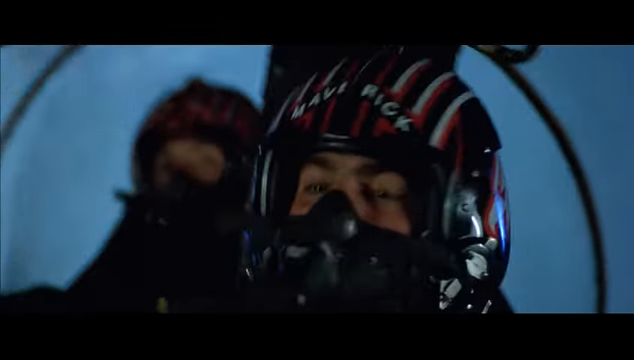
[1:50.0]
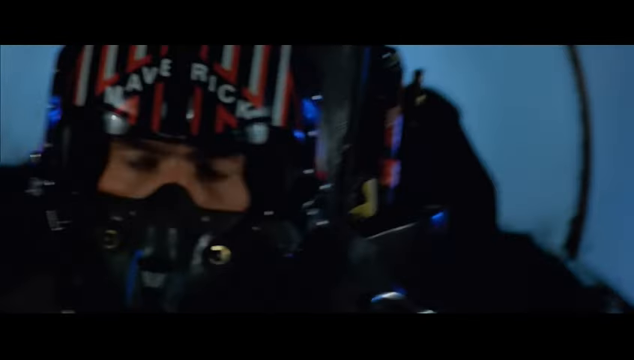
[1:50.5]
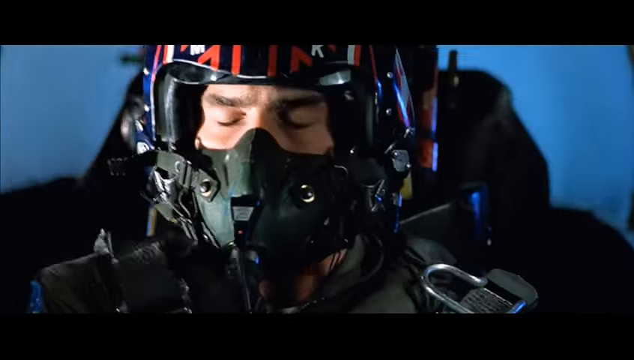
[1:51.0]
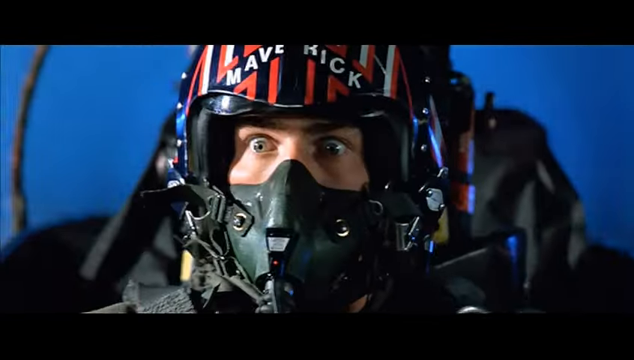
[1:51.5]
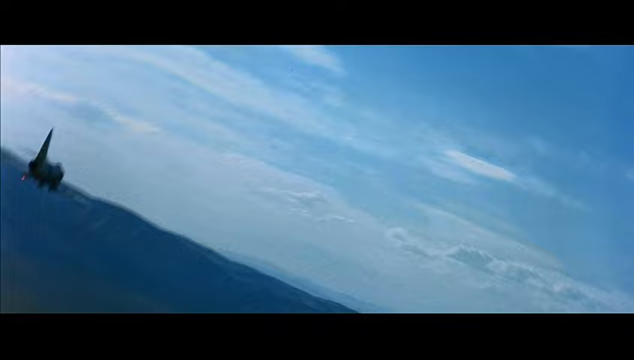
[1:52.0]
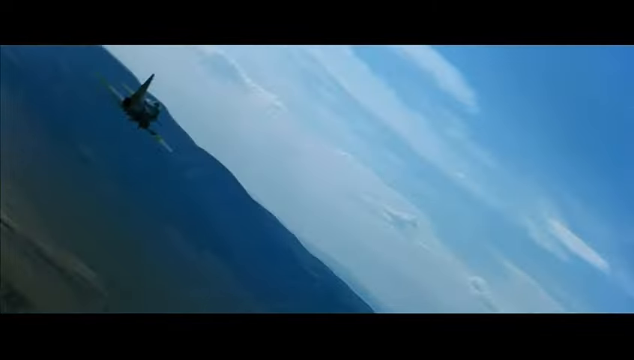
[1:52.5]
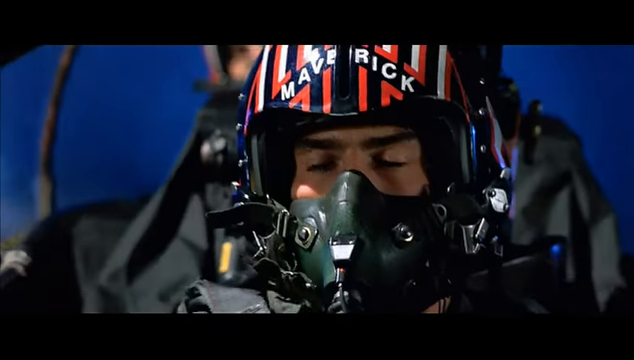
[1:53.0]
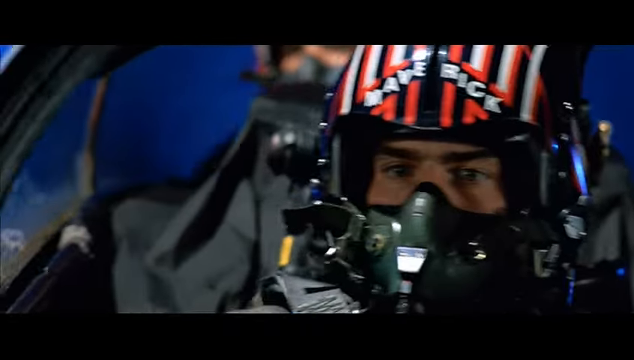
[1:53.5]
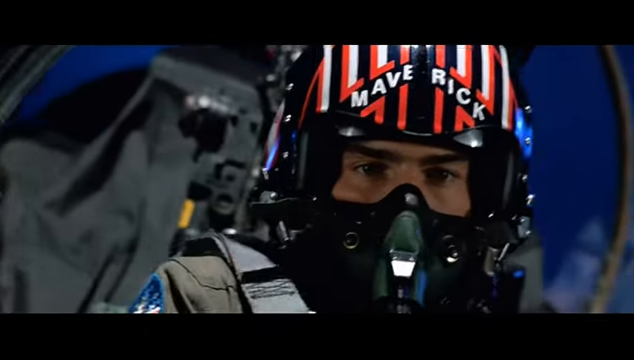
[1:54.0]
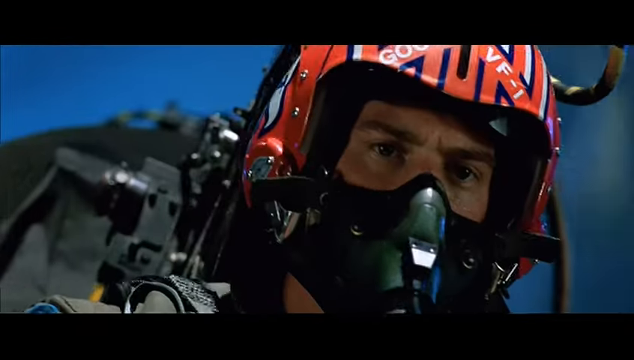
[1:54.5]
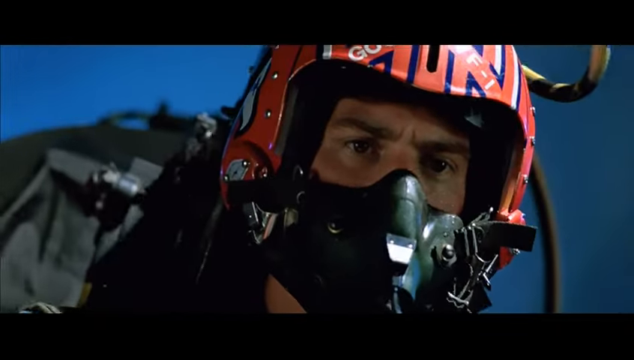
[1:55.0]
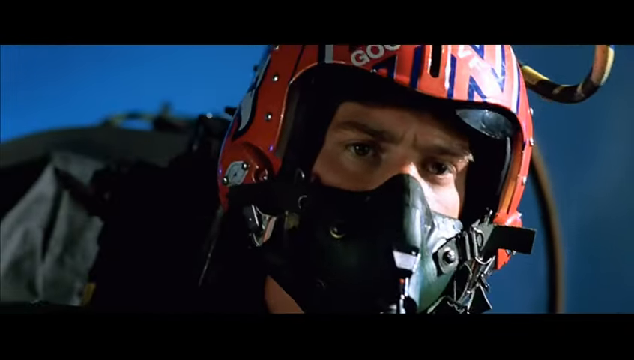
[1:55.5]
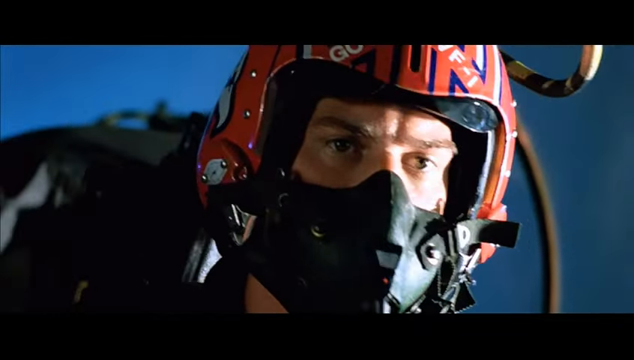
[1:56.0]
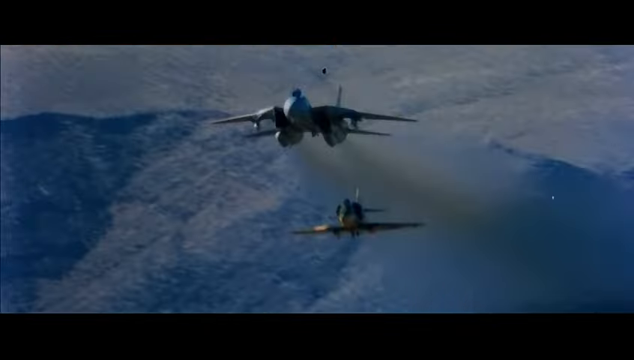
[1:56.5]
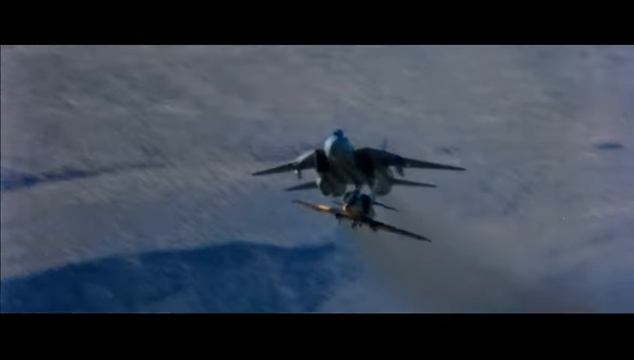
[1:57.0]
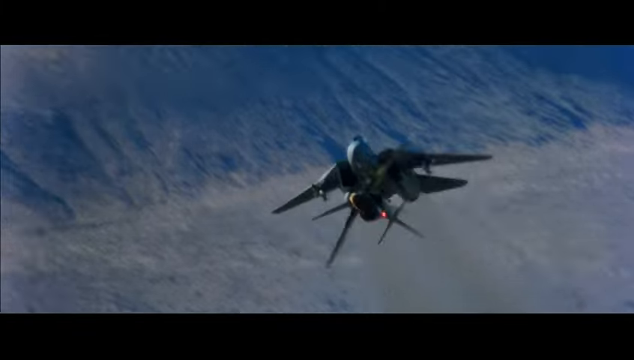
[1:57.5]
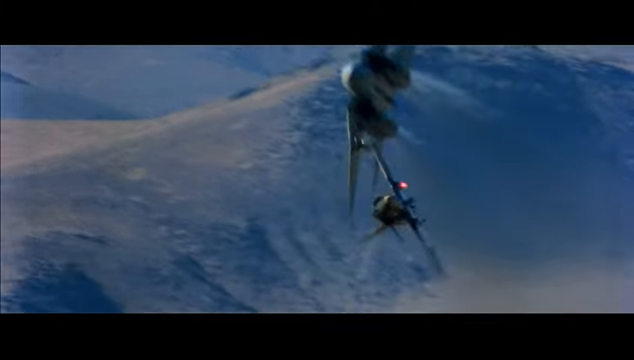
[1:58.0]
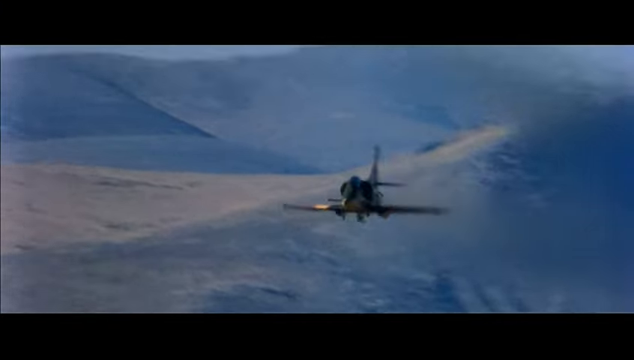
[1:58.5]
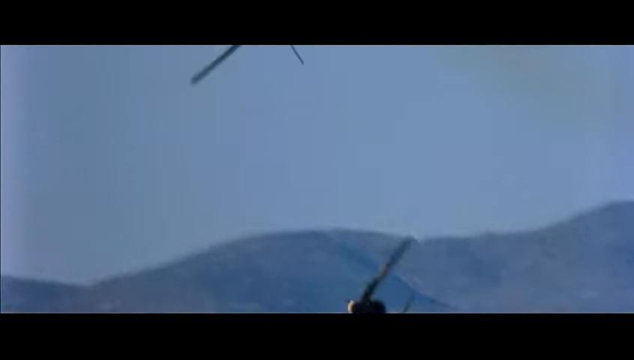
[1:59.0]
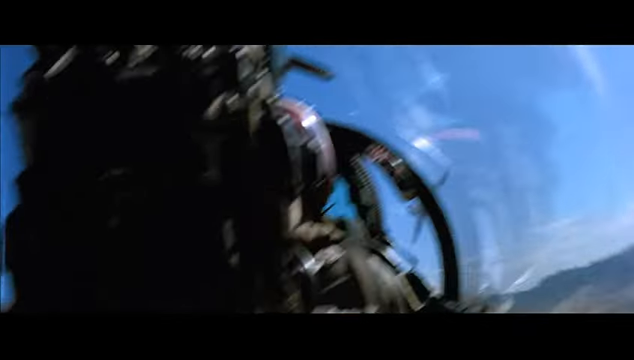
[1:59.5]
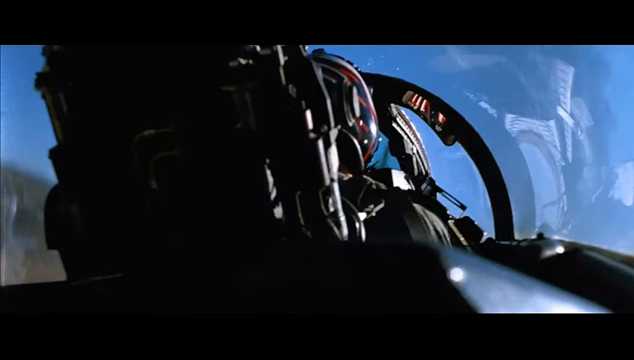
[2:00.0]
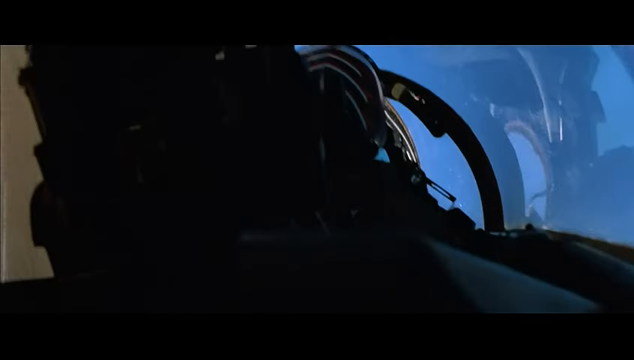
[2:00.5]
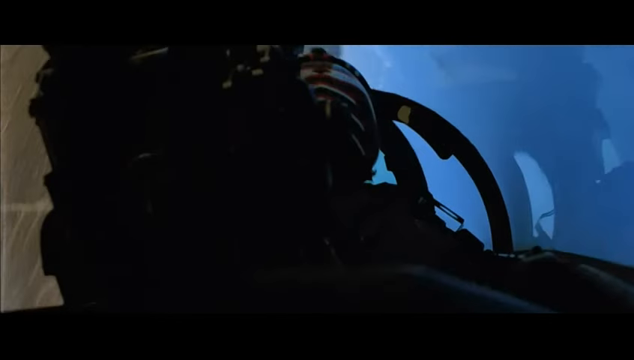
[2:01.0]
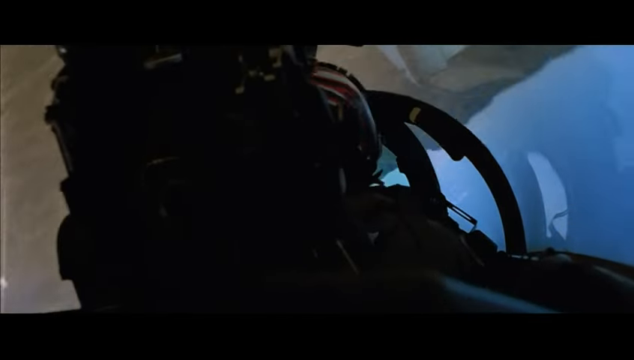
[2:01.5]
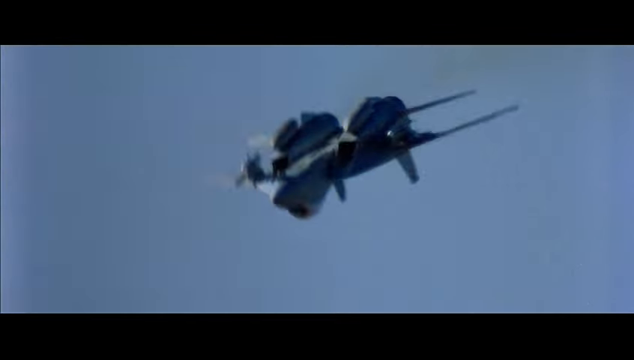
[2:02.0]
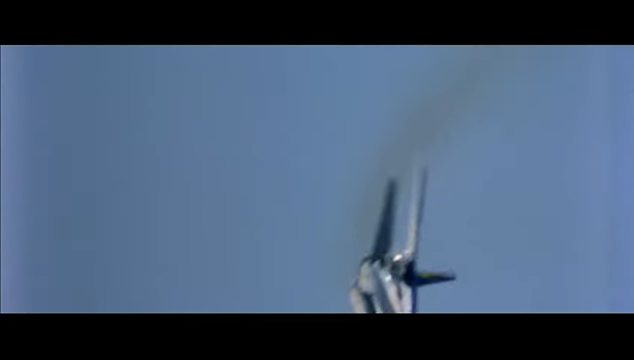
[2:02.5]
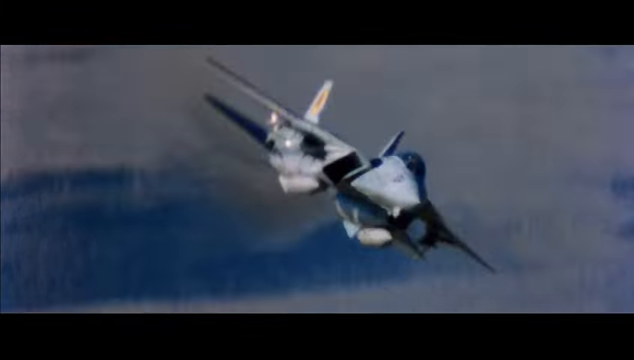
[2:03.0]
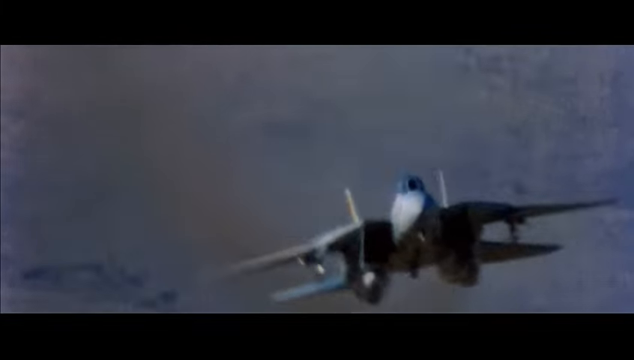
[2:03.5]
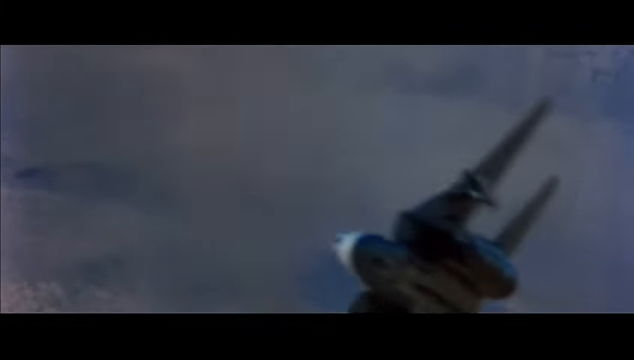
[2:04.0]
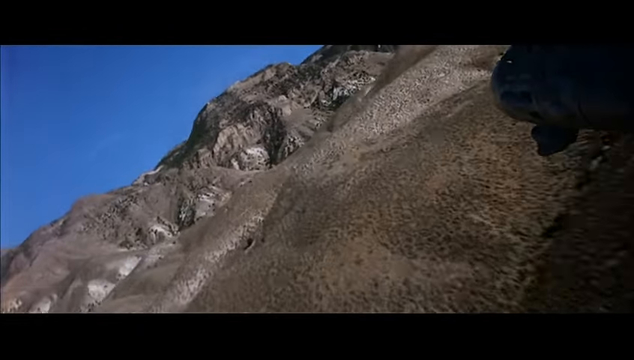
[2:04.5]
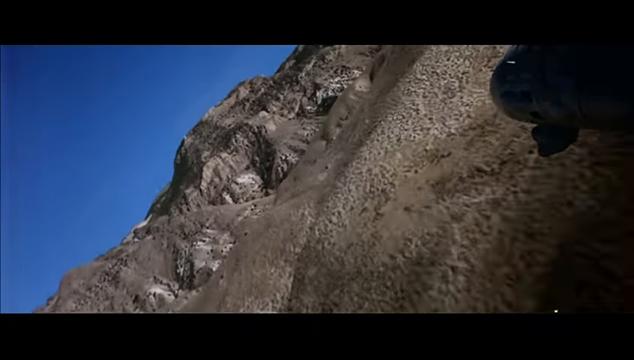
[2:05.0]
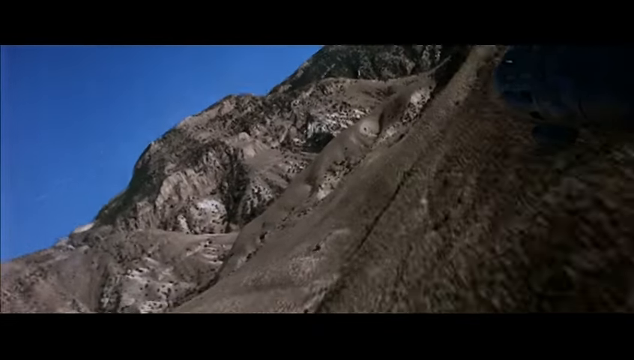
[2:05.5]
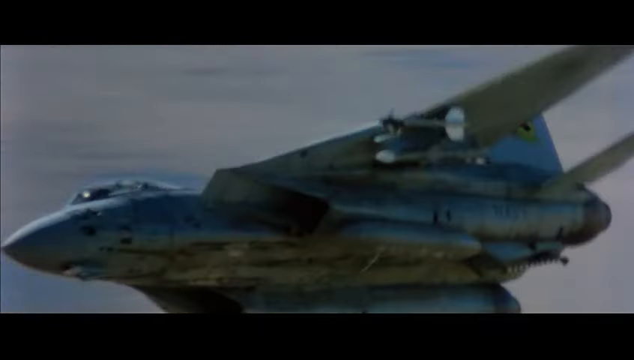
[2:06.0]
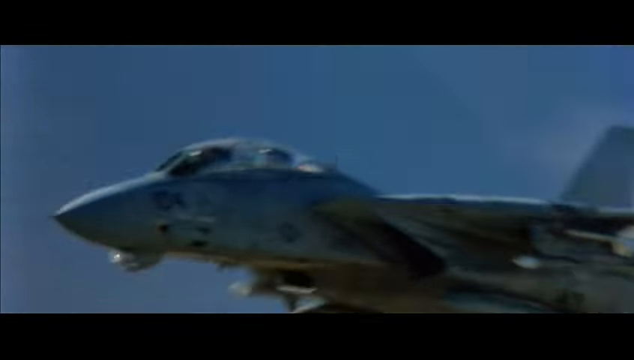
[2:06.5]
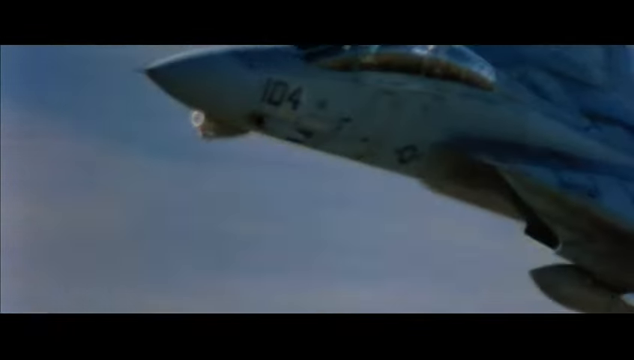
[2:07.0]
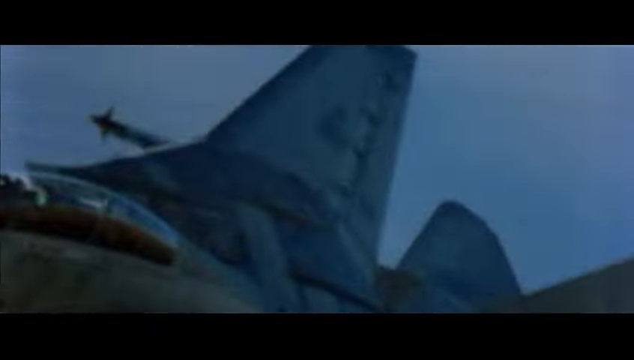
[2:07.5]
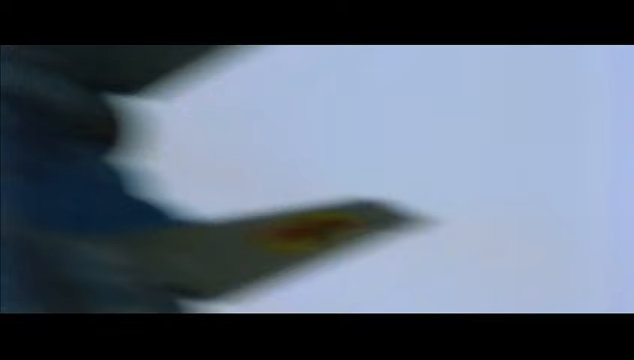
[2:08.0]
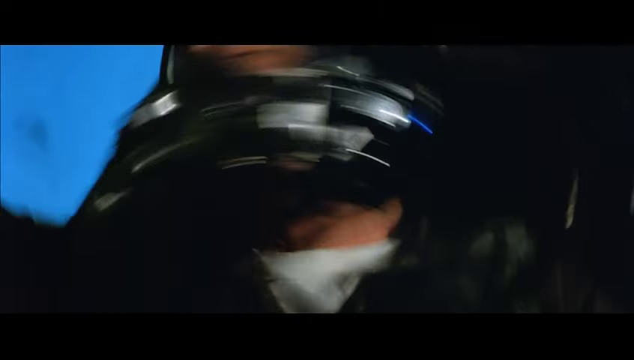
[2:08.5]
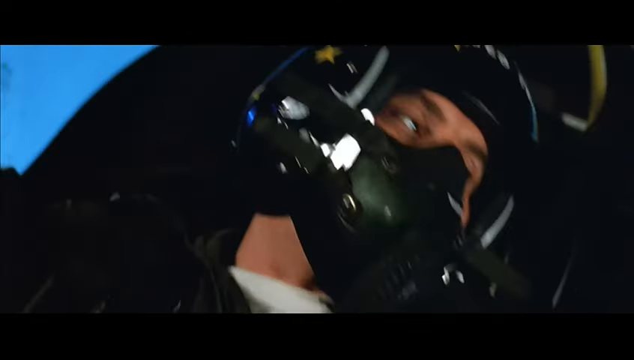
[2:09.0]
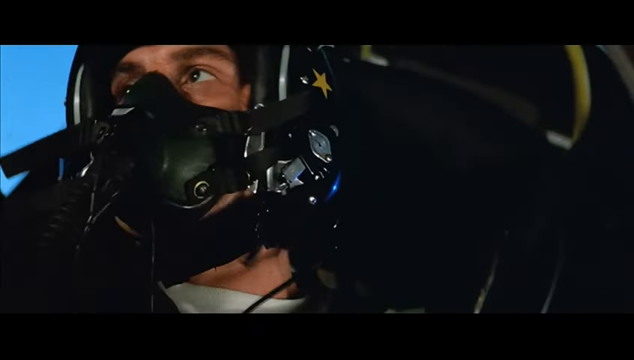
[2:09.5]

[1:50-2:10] Inside a cockpit, the camera faces the pilot, whose helmet has black, white and red stripes and the word "maverick" across the top in a triangular form. The pilot looks distressed; he looks forward and starts to blink as if he cannot believe what he has just seen. A view from the cockpit shows a jet fighter just to the left of the screen, then the shot returns to the cockpit. The two planes fly in the sky, both doing barrel rolls. A shot from the side of a plane shows it going through another set of canyons, getting extremely close to the ground, followed by another view inside the cockpit.